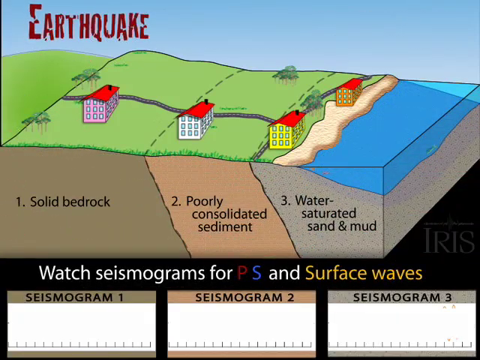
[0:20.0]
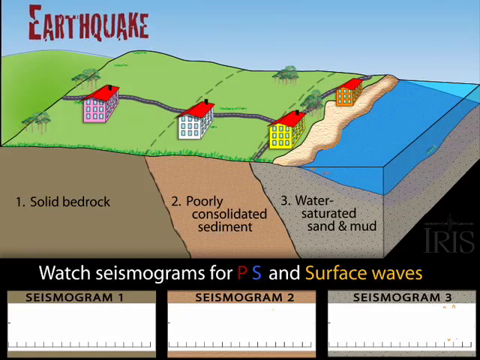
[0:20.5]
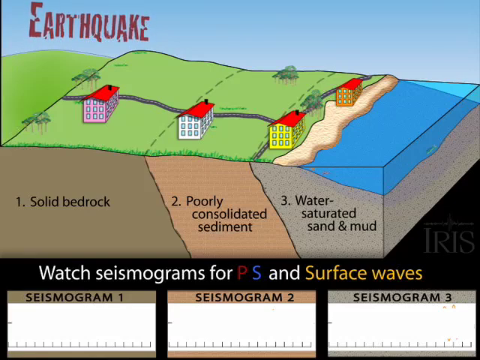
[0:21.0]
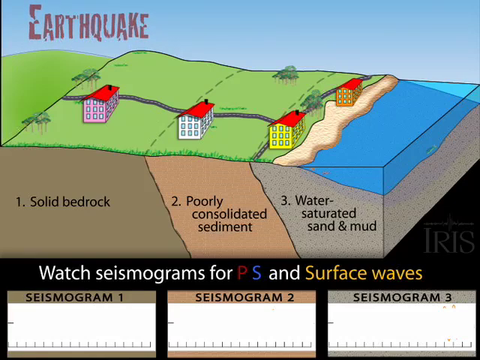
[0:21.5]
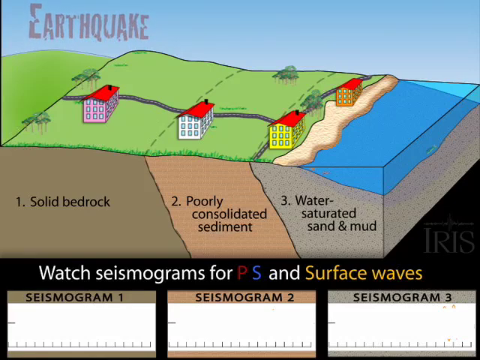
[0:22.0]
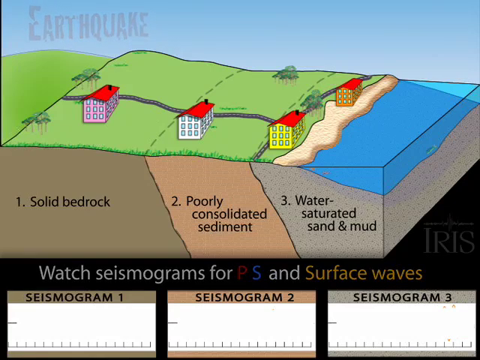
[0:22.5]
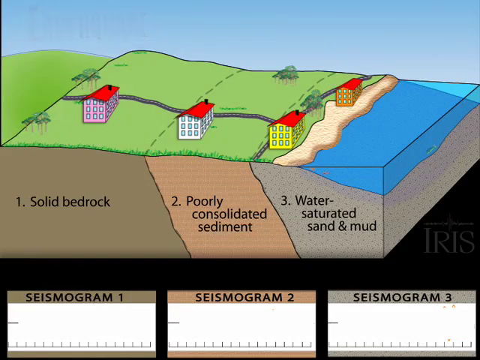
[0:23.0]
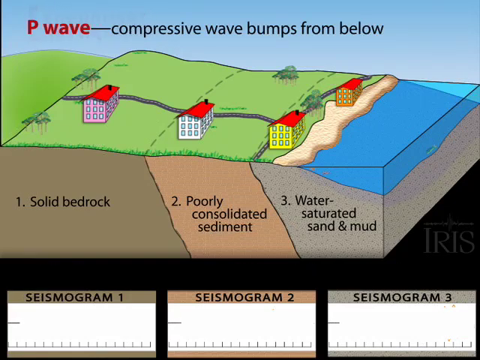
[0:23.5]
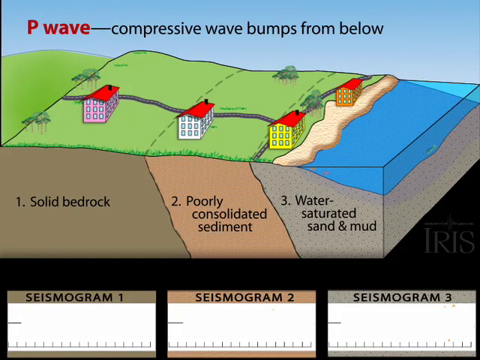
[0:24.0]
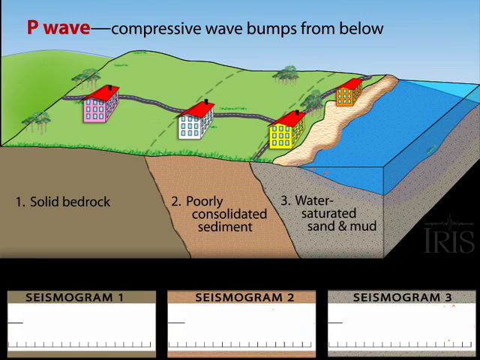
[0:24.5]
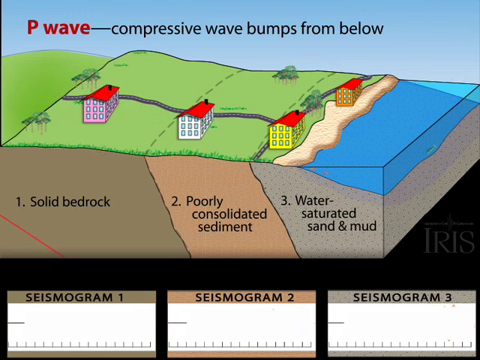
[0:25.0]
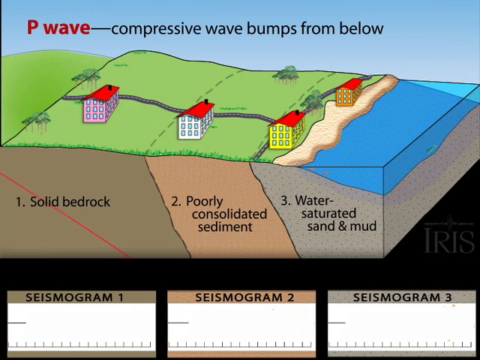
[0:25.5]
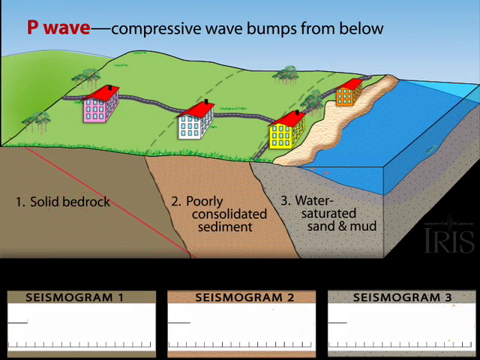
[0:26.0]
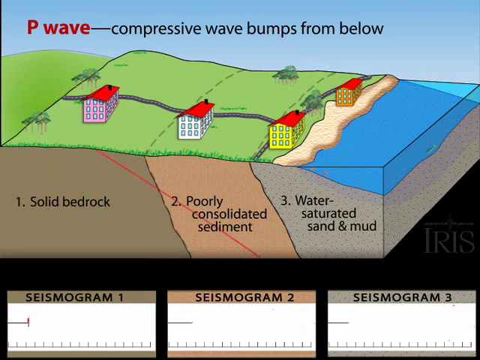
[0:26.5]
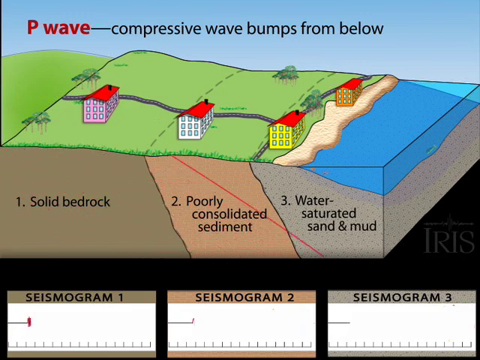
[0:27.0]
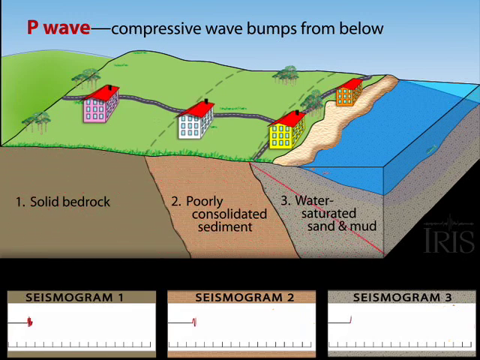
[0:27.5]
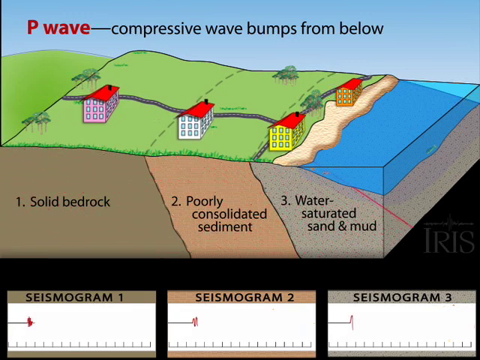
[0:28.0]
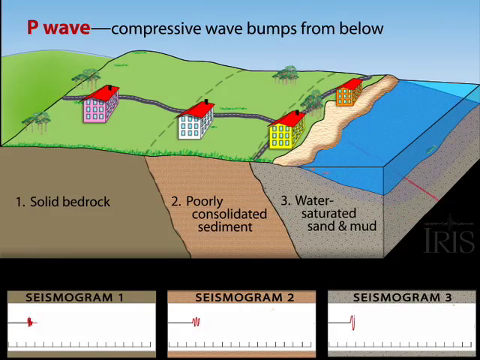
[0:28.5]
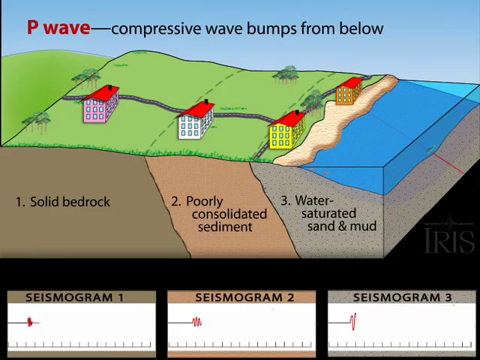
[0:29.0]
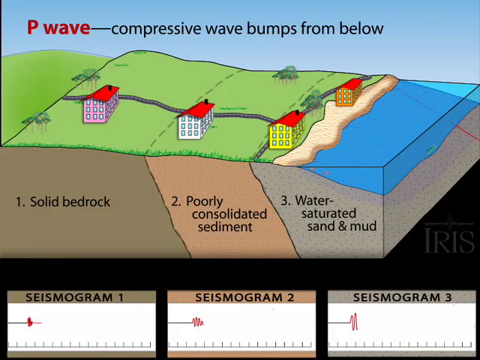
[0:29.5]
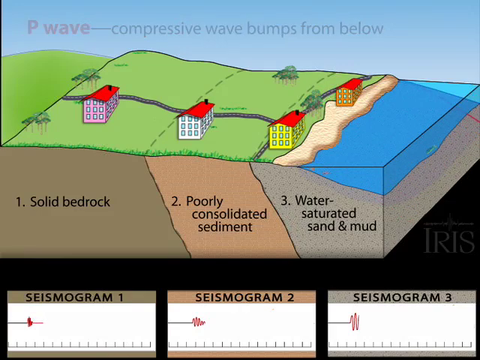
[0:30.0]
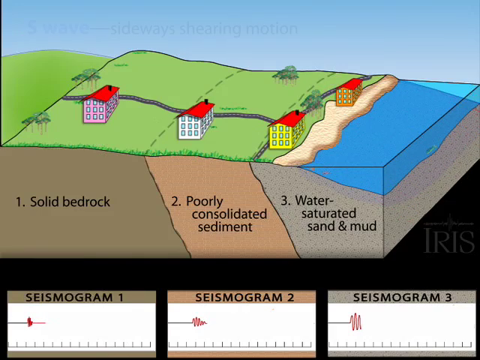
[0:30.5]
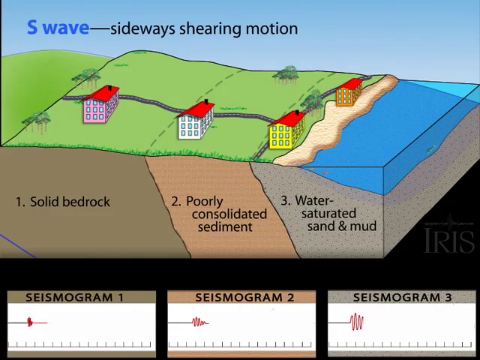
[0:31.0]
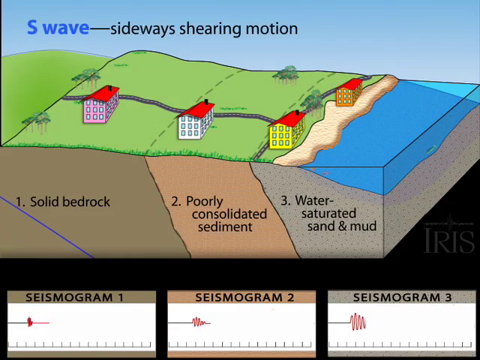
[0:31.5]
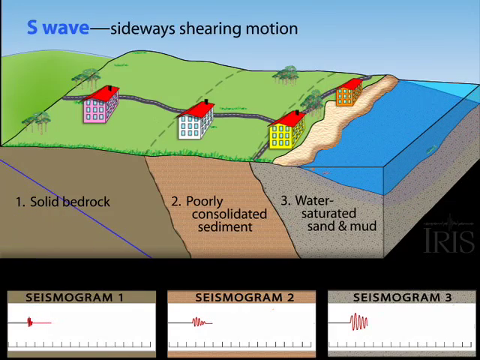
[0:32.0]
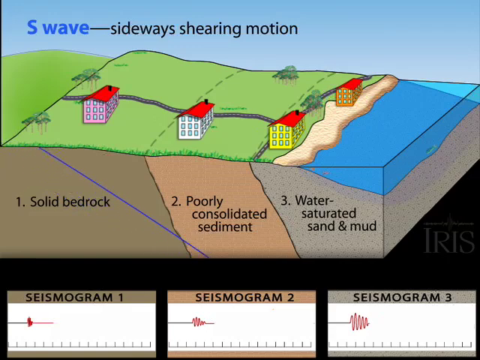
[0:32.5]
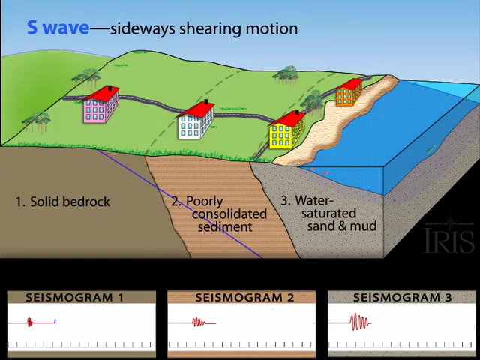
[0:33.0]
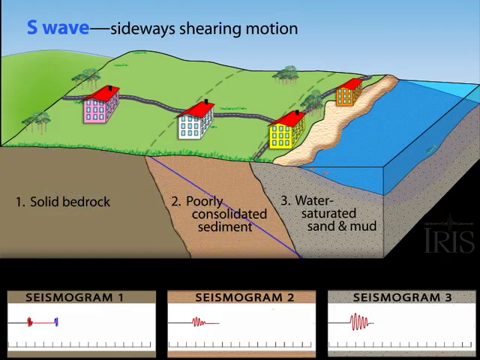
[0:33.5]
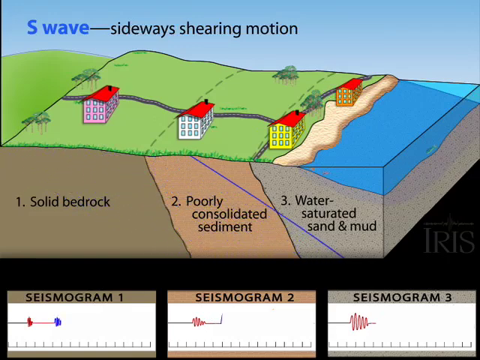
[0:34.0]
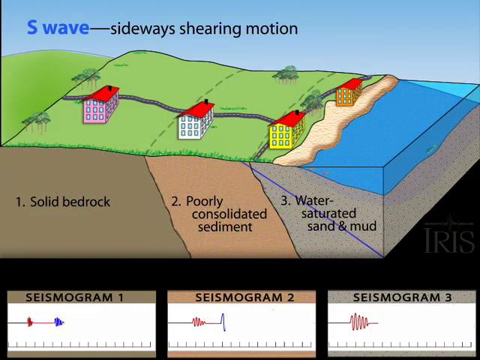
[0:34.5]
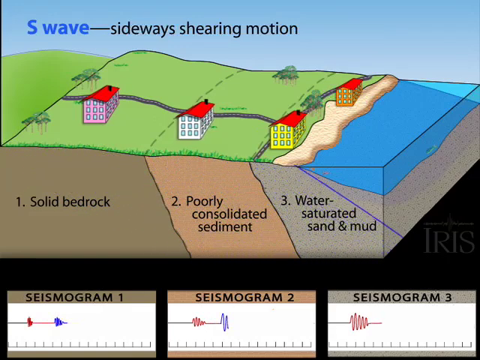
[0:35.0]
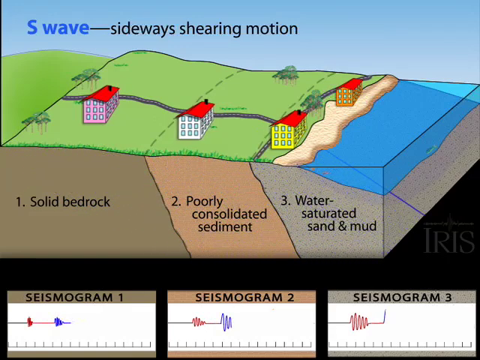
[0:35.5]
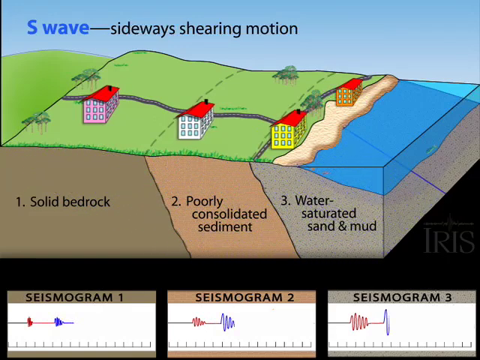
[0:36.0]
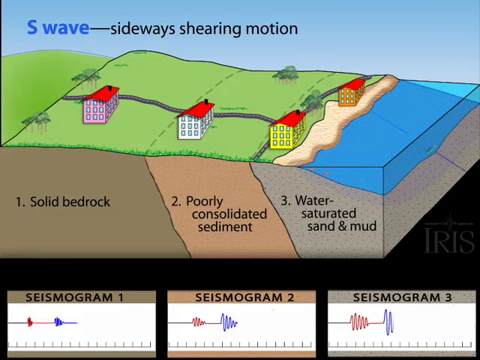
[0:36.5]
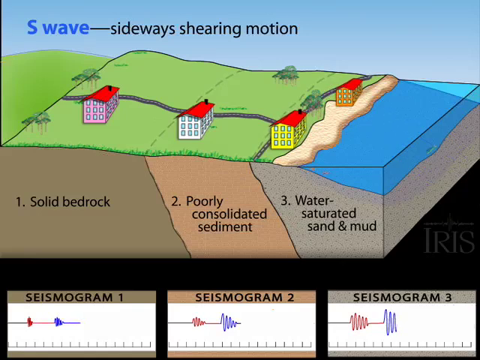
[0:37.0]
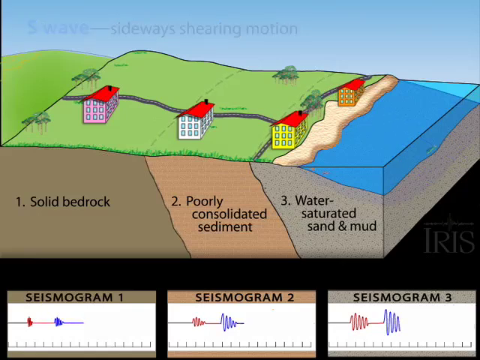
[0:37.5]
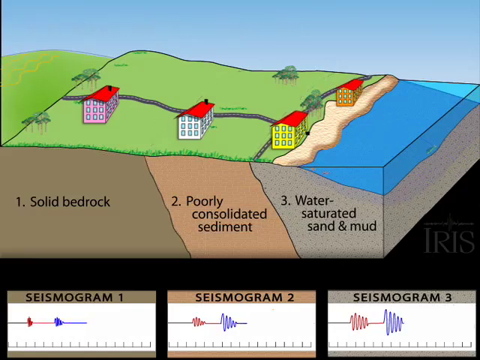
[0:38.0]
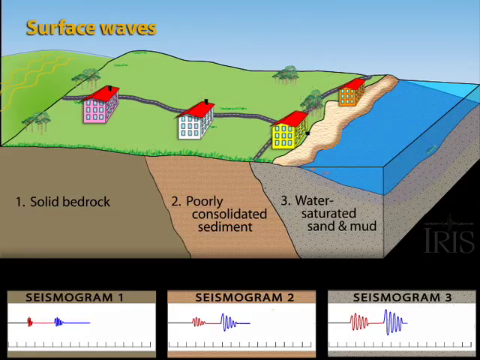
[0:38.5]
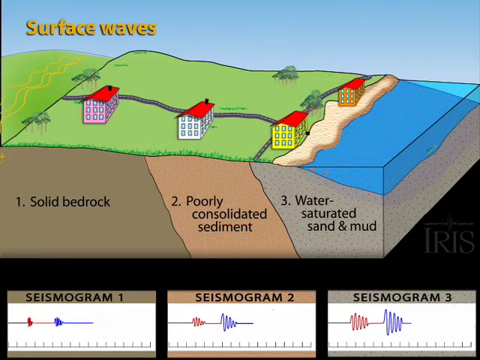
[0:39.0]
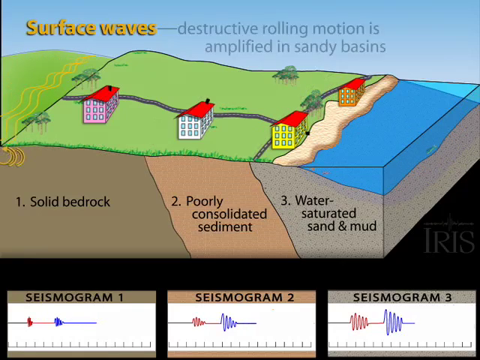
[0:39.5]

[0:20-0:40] The same scene continues with P waves, S waves and surface waves. There are six houses in total, each in a slightly different colour shade. The view is cut in section to show how the earthquake passes through solid bedrock, poorly consolidated sediment, and water-saturated sand and mud, with the water against the ocean shore. The S wave is shown with a sideways shearing motion, and the houses react to it. The houses, all built exactly the same, shake according to where they sit. As each wave passes, a seismogram shows the shaking. The house on solid bedrock appears to hold up much better than the others, while those on water-saturated mud show much larger movement on the seismogram.